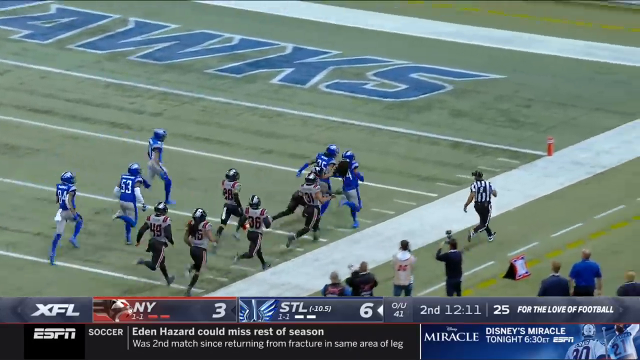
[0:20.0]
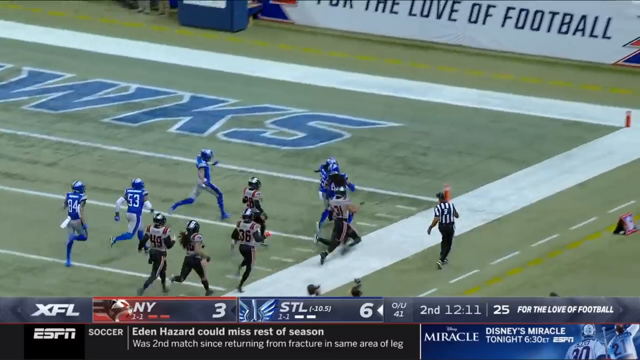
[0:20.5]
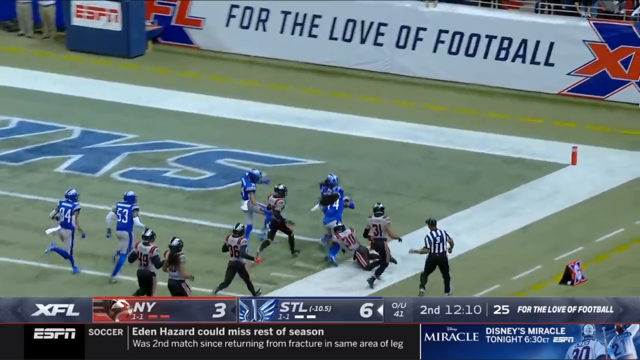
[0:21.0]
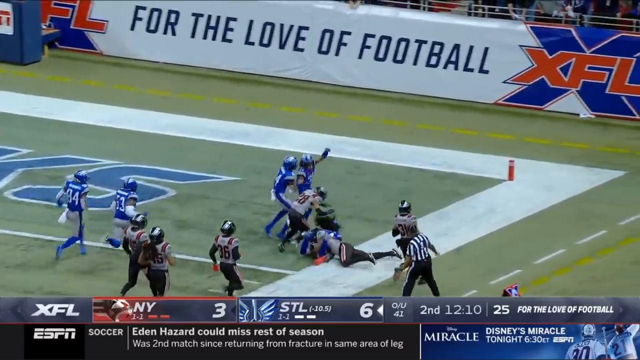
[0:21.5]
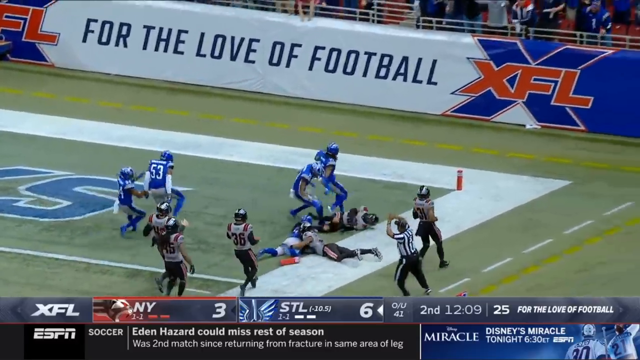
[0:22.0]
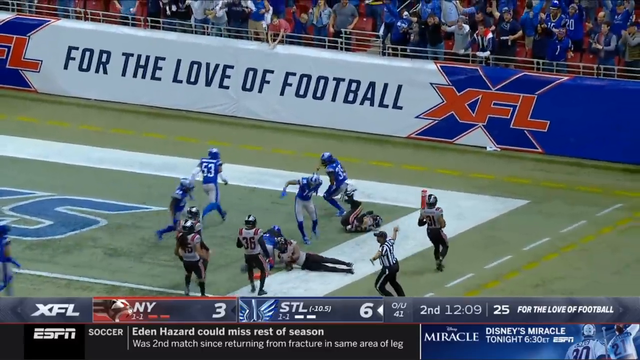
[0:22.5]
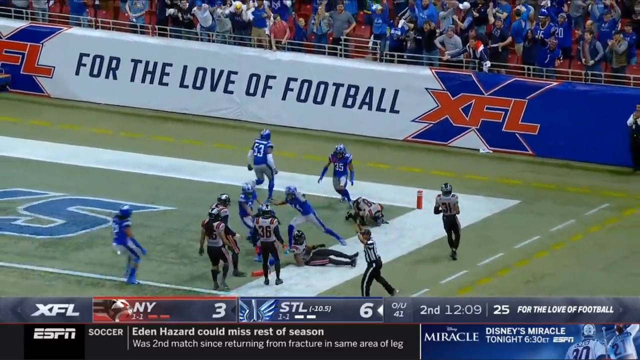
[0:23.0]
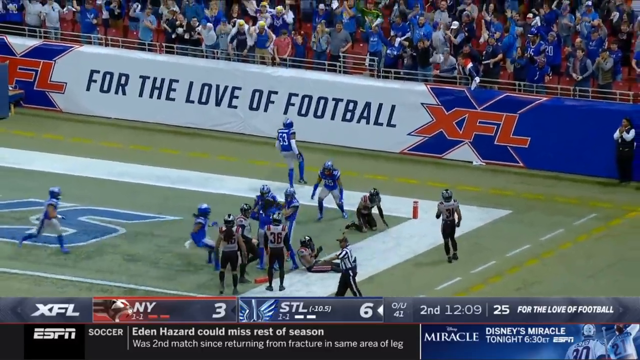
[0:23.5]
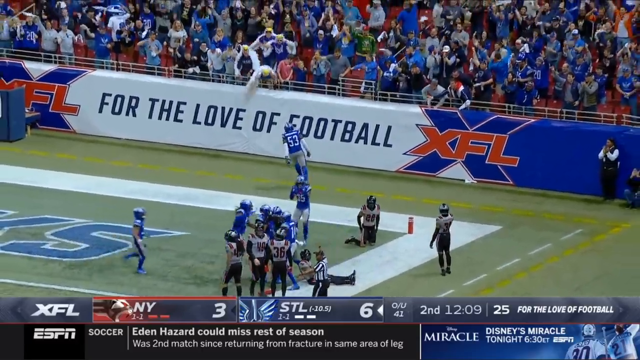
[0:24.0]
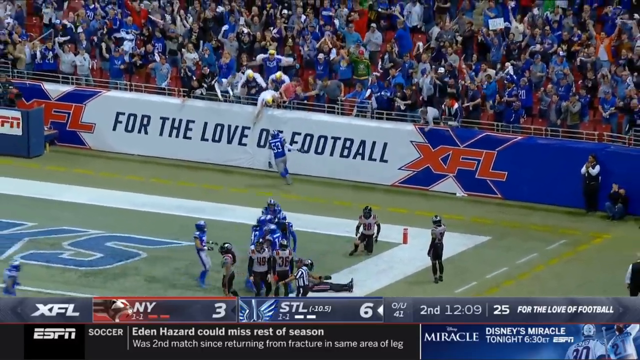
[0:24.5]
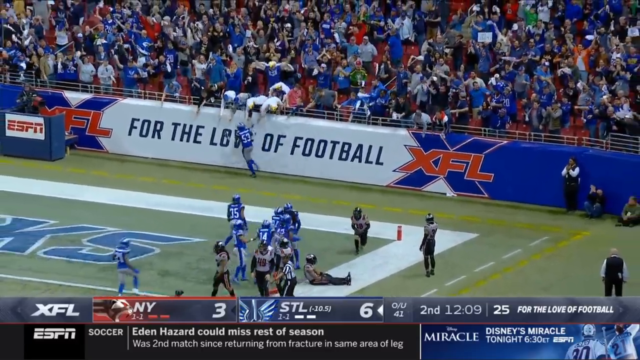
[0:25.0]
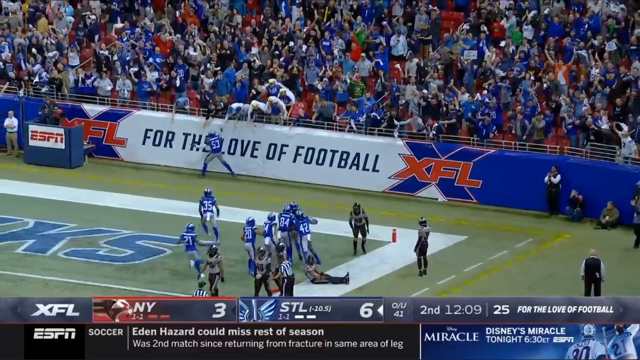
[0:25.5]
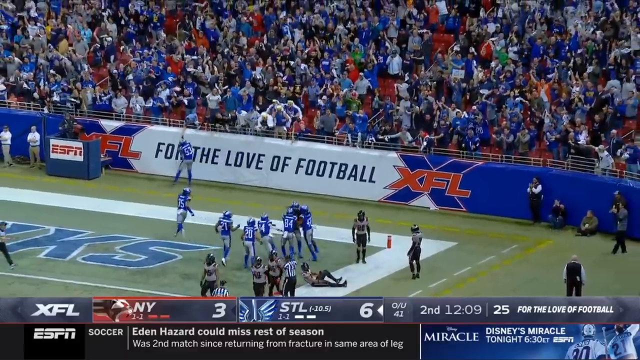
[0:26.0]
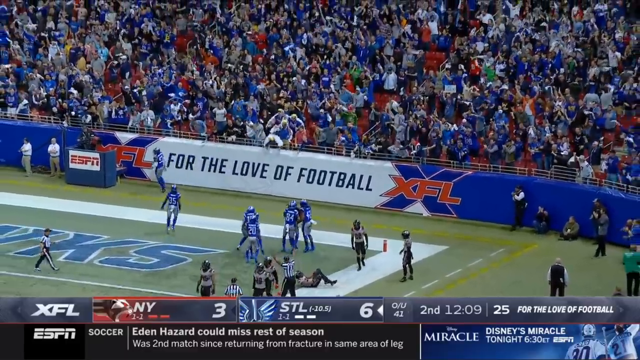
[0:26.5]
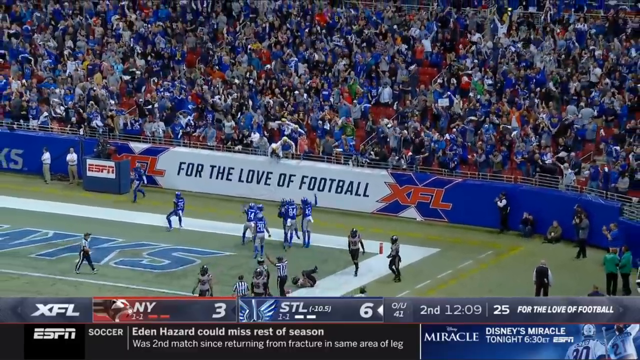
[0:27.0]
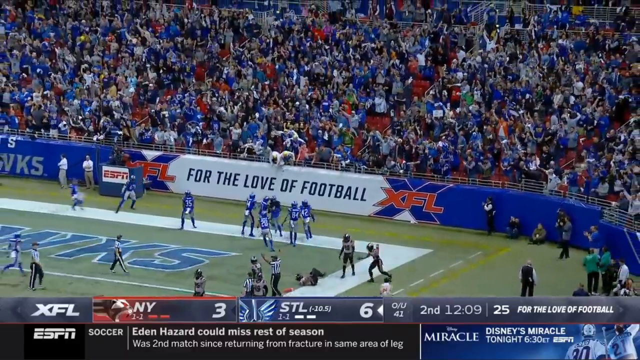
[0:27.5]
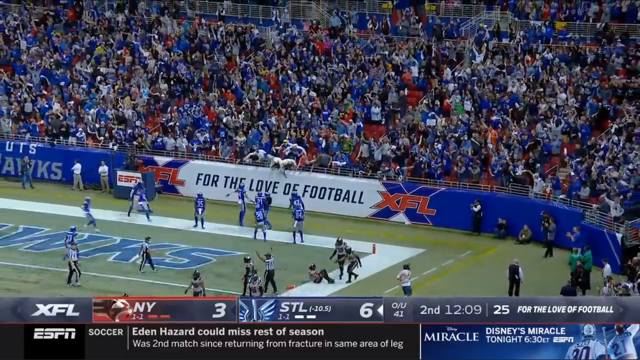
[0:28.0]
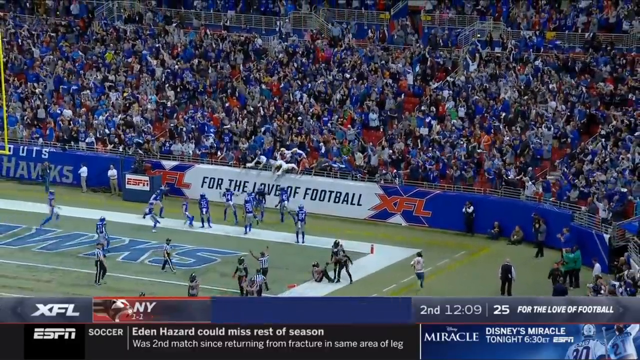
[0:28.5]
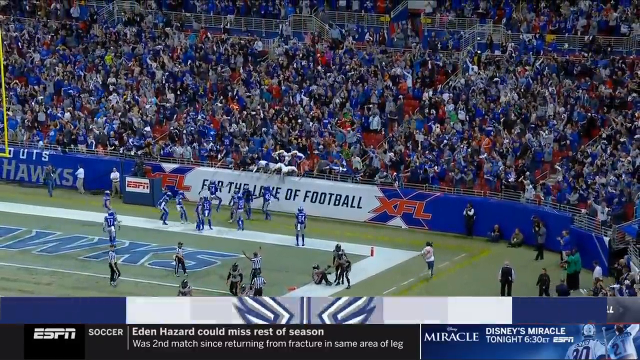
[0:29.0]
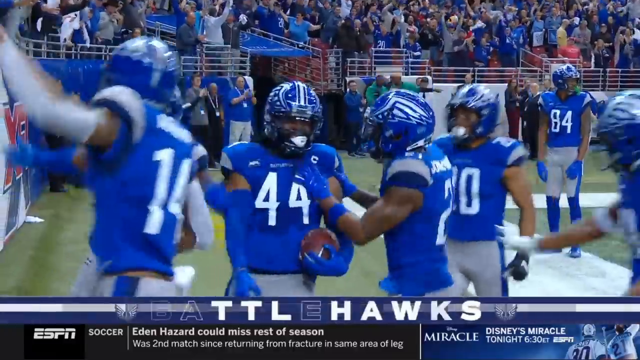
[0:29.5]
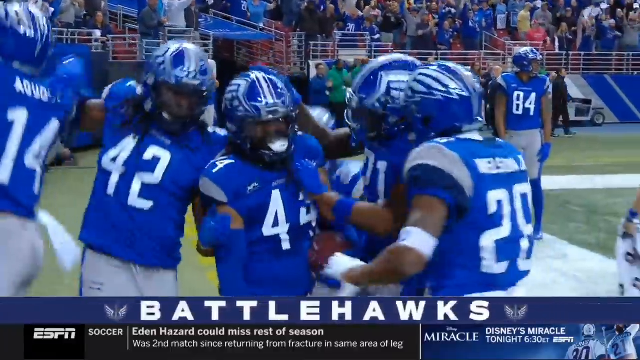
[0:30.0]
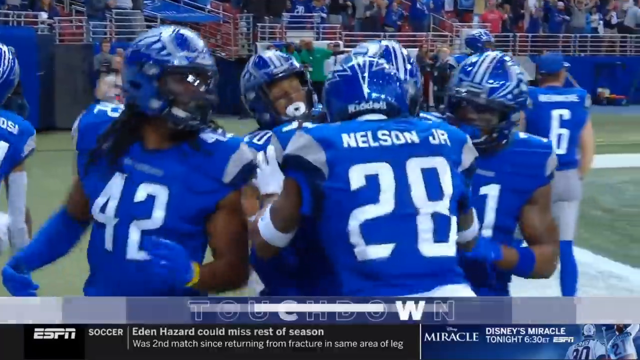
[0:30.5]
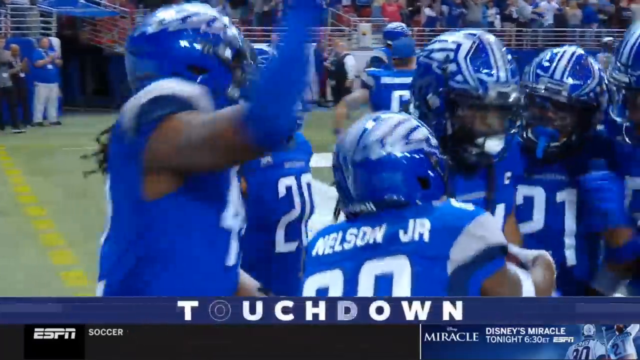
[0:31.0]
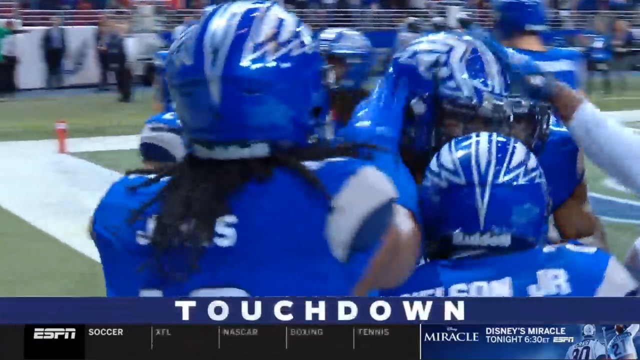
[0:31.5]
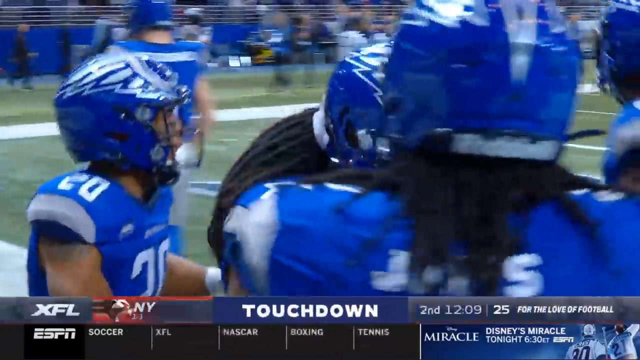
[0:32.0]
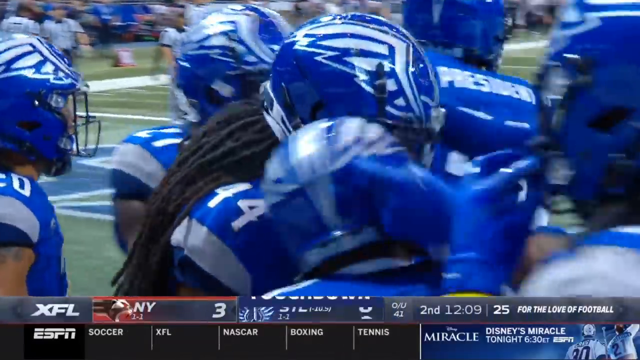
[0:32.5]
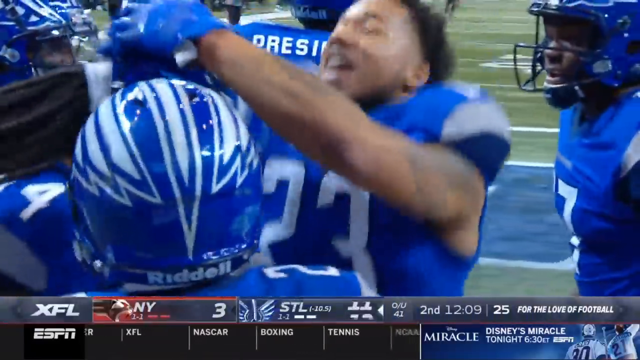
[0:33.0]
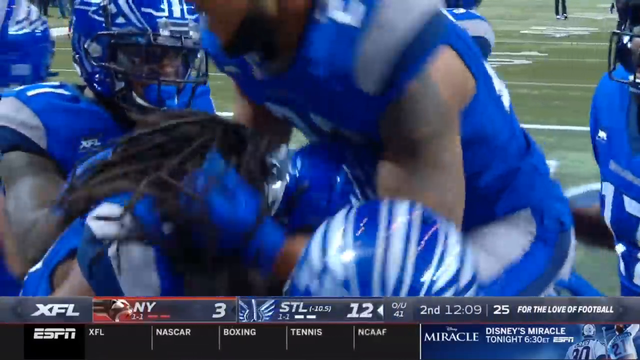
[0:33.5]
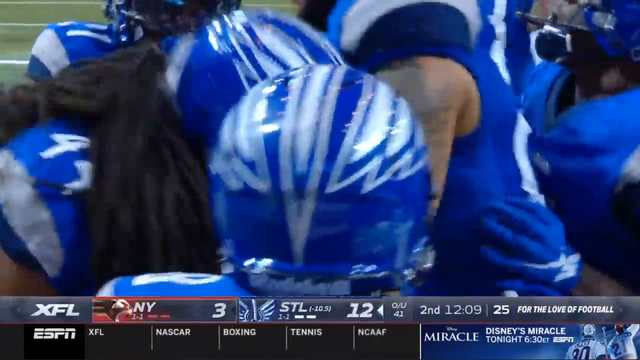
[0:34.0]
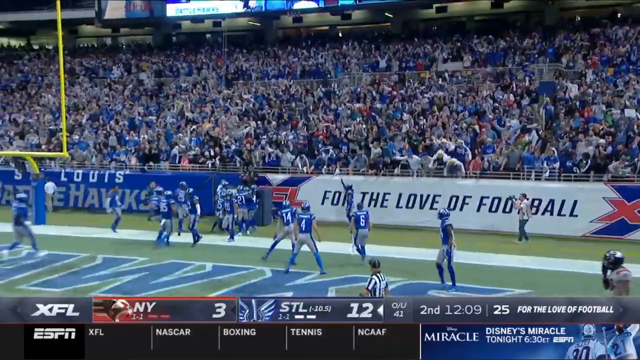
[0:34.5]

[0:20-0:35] At a football game, a player kicks off, and a player catches the ball and throws it to another player, who runs. He wears a blue jersey. There are many other players; the opposing players wear black, white and red, while the team with the ball wears blue and white and is apparently called the Battle Hawks. The runner scores a touchdown. The fans cheer and the players cheer, and fans wearing hawk outfits or costumes cheer. A sportscaster watches the game from up in the stands, and then the player who scored is shown running. The screen splits, with a referee on one side and the sportscaster on the other. The referee, in a black and white striped shirt, talks and points, starts walking away, walks backwards and throws his arm down. The team goes for extra points, throws, and misses. A woman interviews the player who scored, who wears a blue jersey with 44 on it; her microphone has an E on it, for ESPN. "XFL" comes on the screen, then a replay of the touchdown begins and goes into slow motion, ending the video.